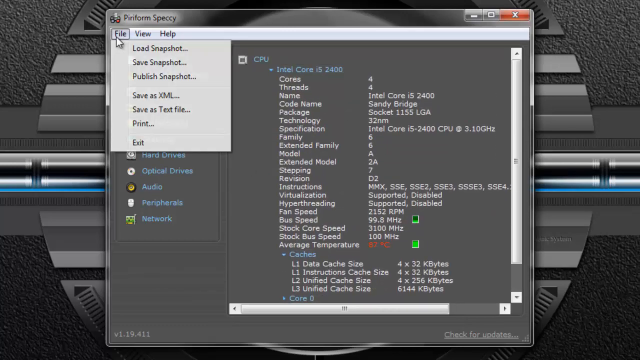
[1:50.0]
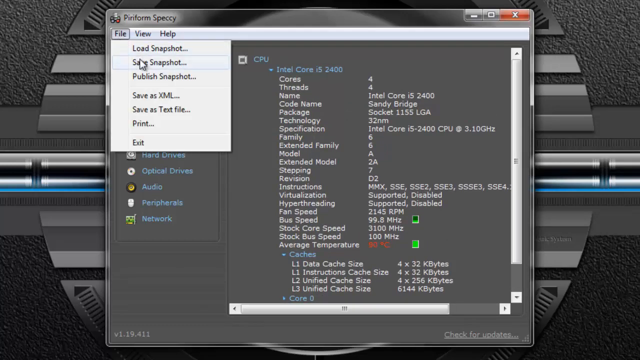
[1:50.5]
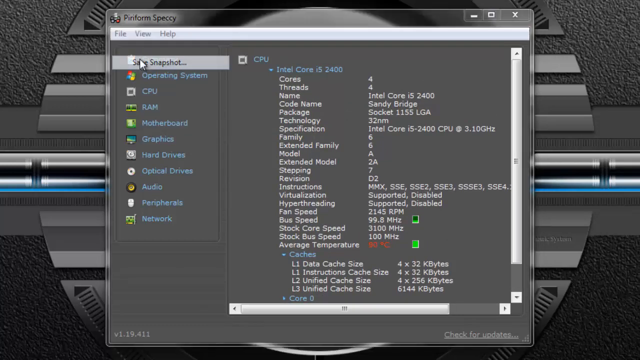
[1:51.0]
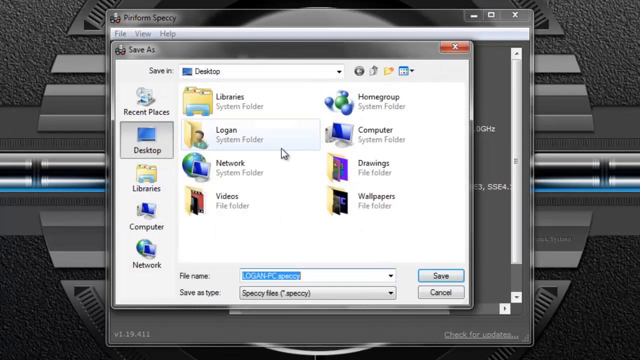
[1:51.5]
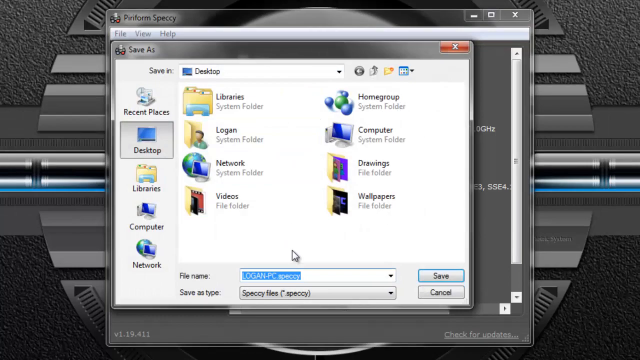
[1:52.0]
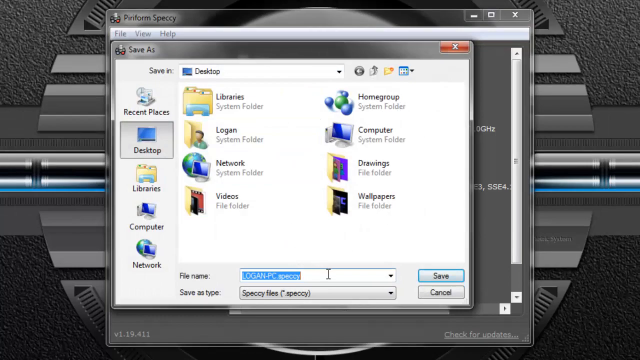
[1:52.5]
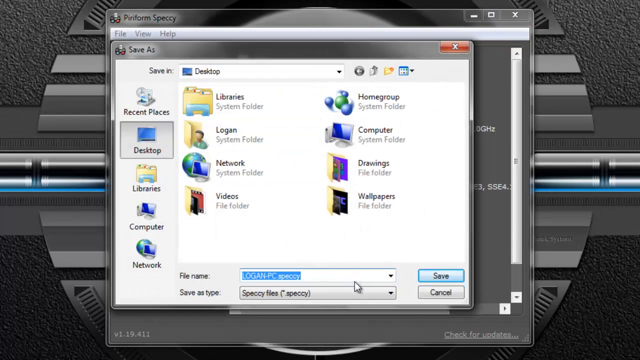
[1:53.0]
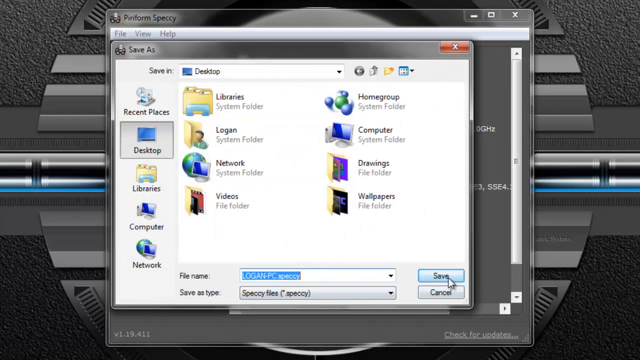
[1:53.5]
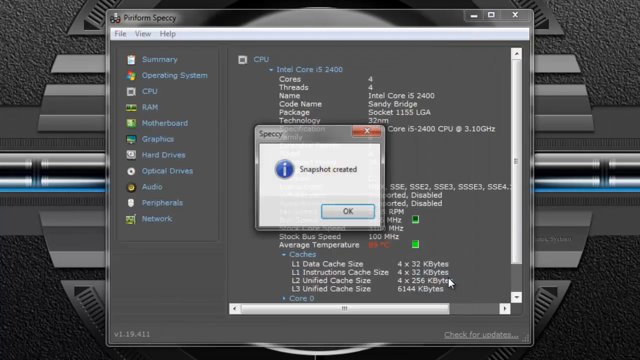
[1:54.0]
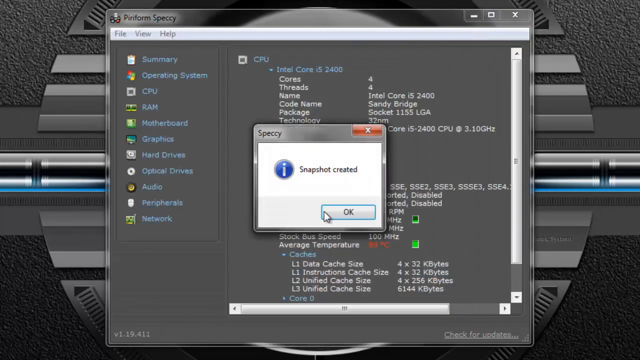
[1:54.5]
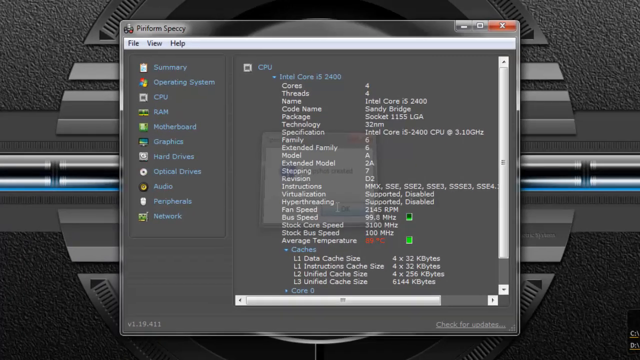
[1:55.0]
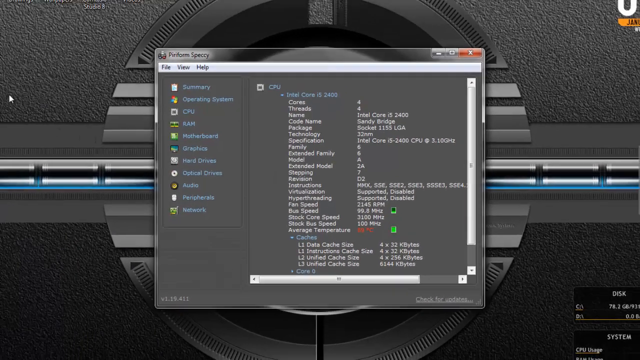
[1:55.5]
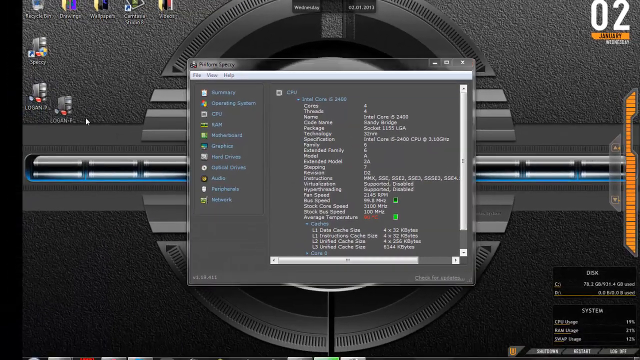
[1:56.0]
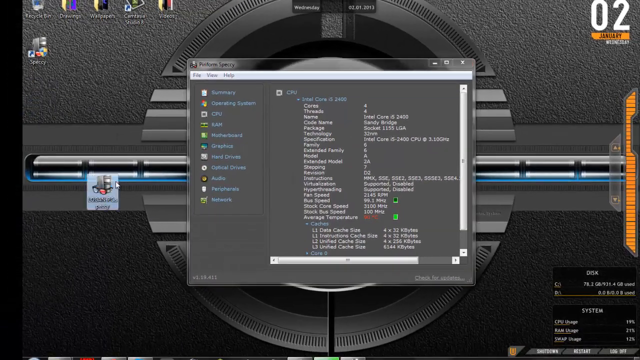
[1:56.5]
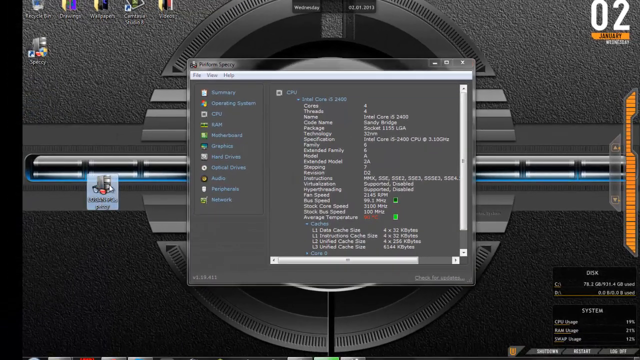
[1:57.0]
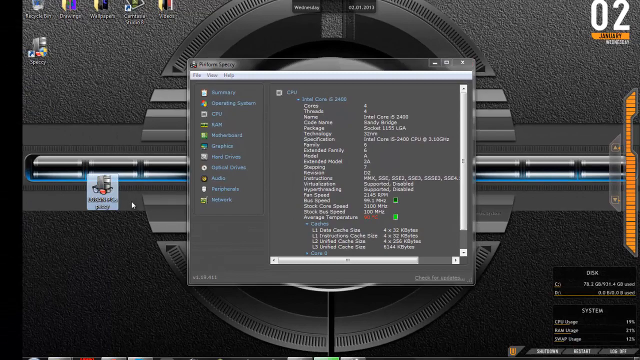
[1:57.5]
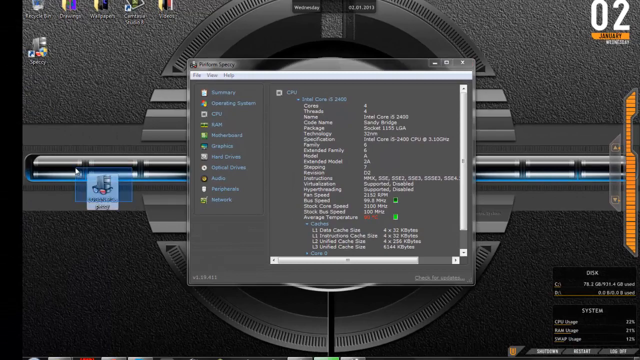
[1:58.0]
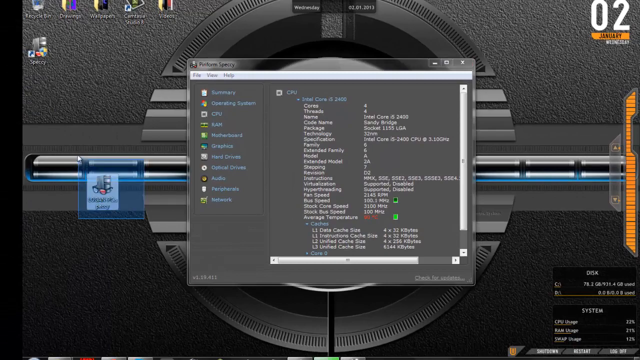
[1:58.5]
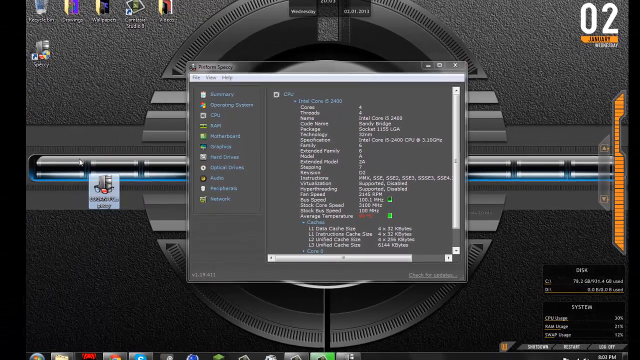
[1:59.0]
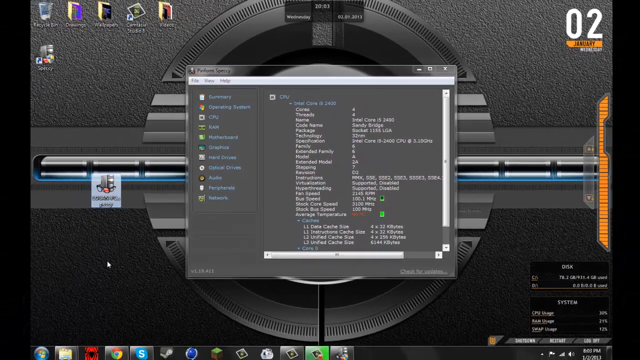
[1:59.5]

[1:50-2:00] The CPU screen shows information about the CPU. The user clicks the file tab and selects the option that says "save snapshot." A save dialog appears, and he chooses to save it to his desktop. A message says "snapshot has been created." He then goes to his desktop, shows where the snapshot was created, and highlights it for a second, without doing much after that.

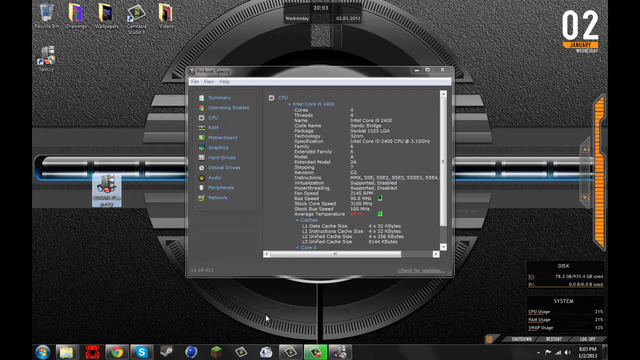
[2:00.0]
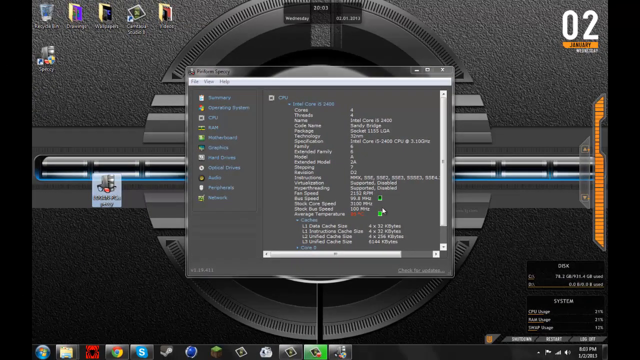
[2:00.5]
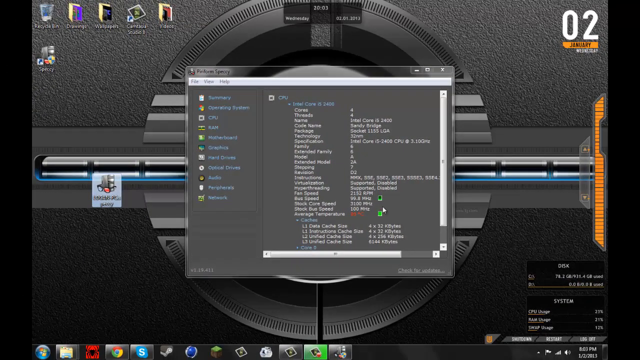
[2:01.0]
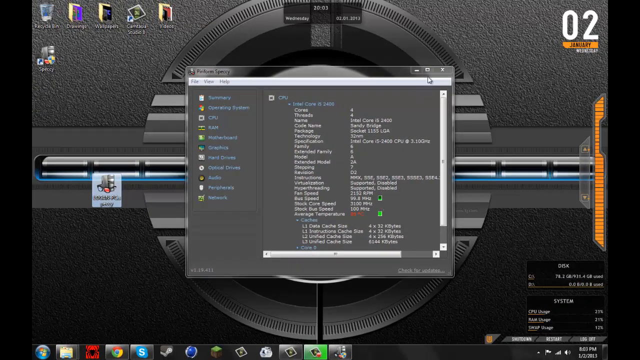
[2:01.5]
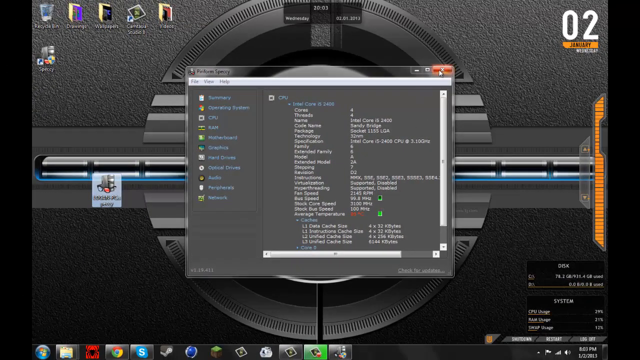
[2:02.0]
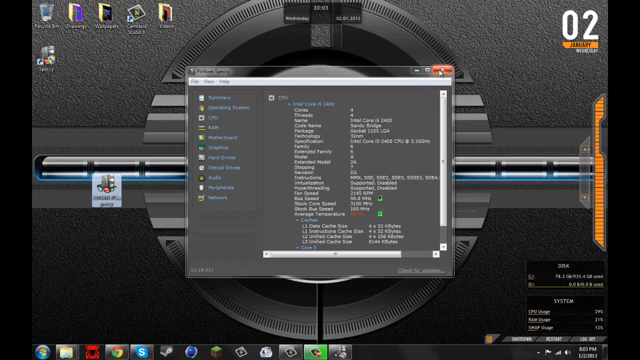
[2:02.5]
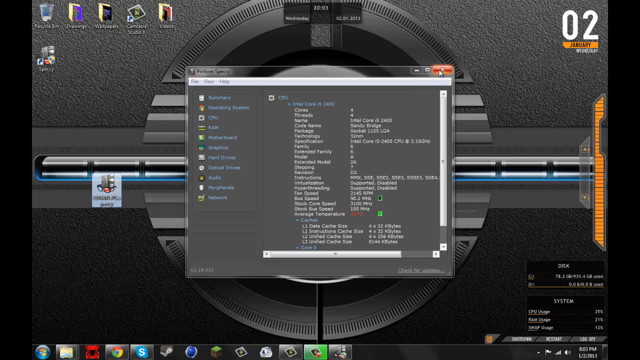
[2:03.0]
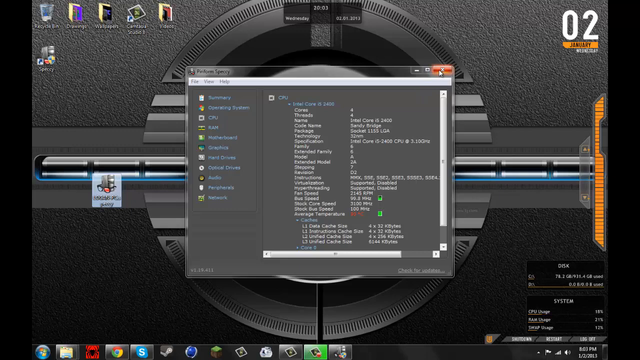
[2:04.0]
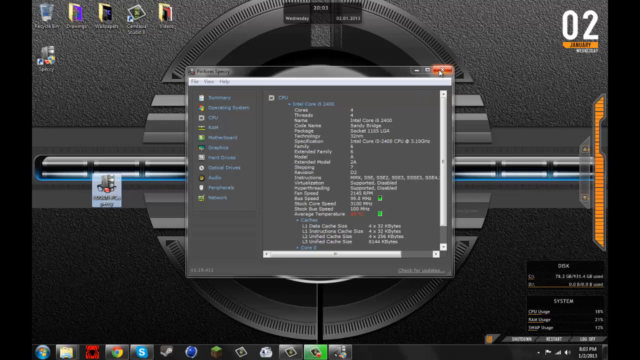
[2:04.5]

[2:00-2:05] The Speccy app is open after the user has saved CPU information to his desktop. He seems about to close the app but never does; it stays open while he just leaves it there.